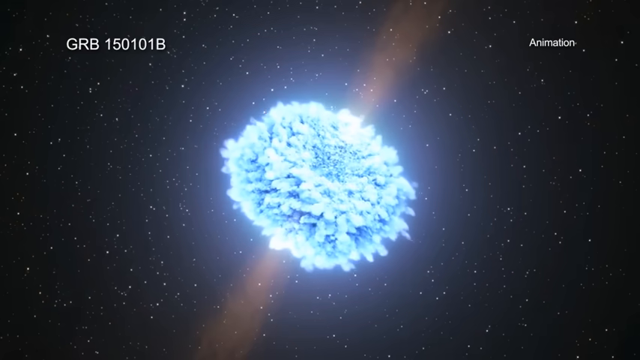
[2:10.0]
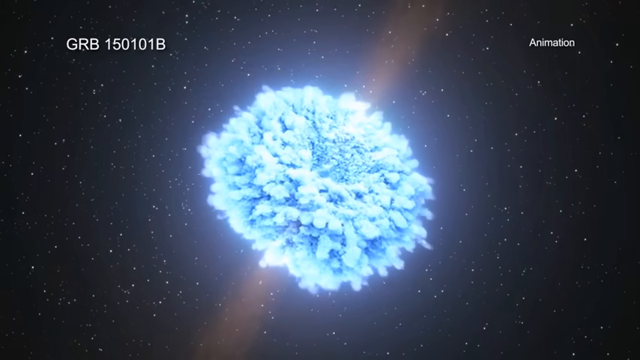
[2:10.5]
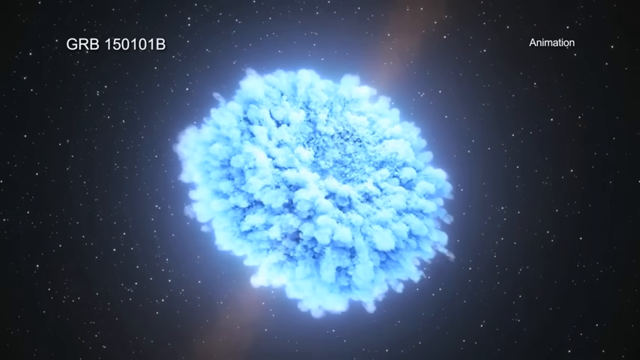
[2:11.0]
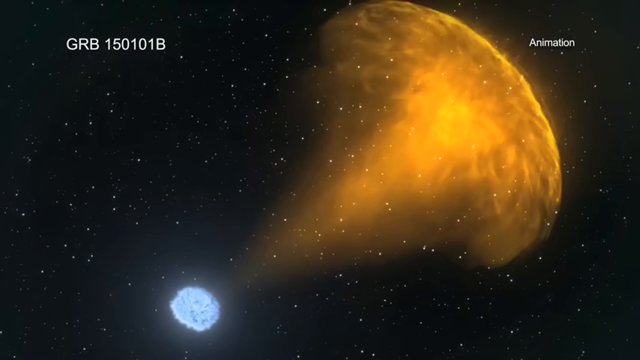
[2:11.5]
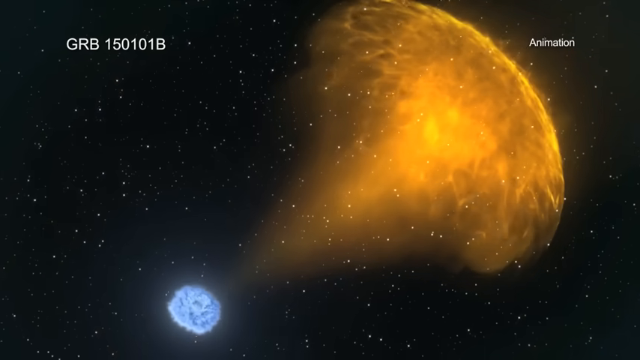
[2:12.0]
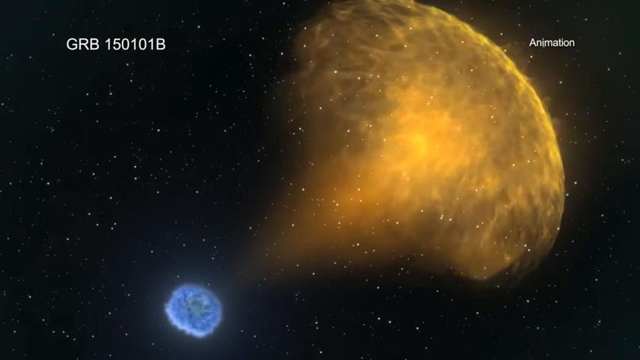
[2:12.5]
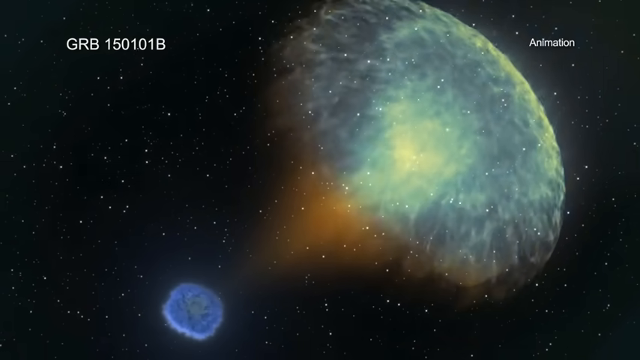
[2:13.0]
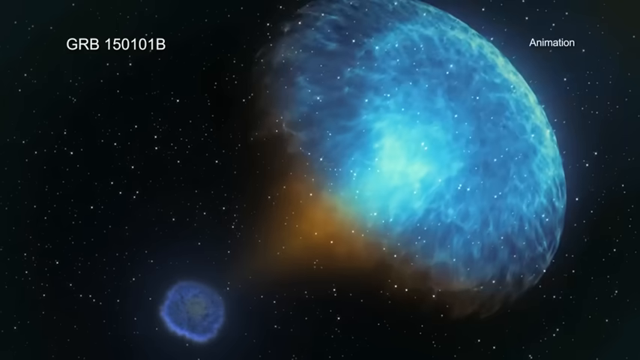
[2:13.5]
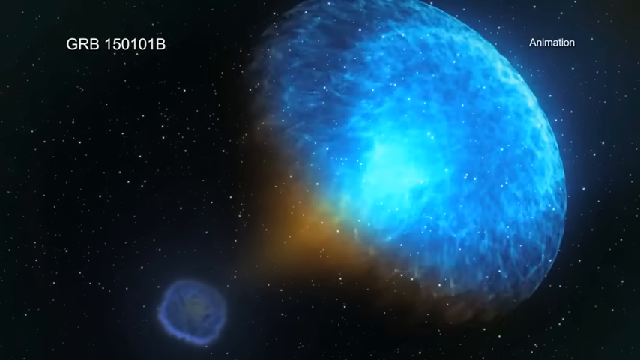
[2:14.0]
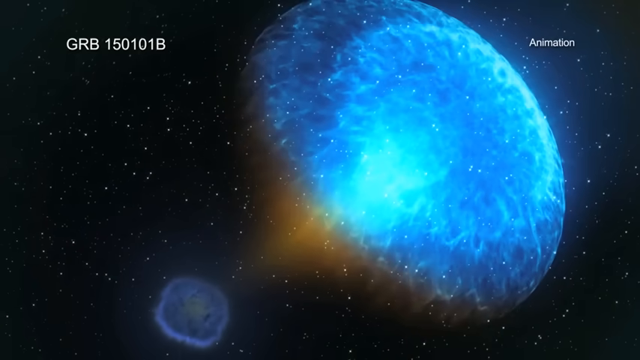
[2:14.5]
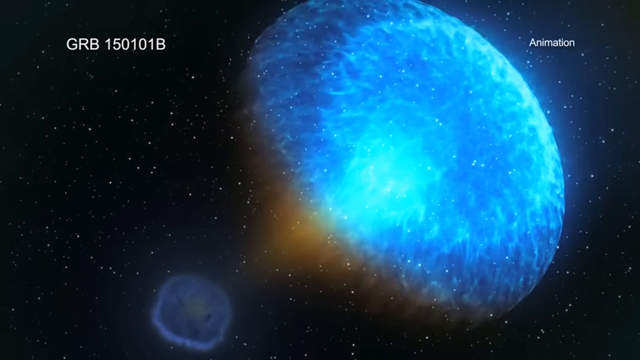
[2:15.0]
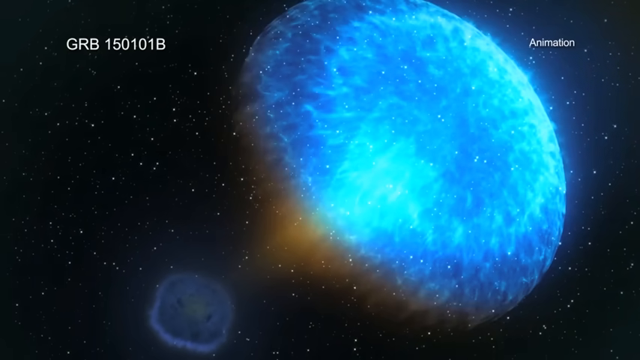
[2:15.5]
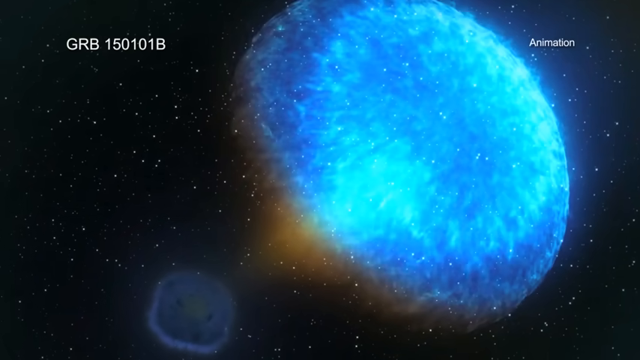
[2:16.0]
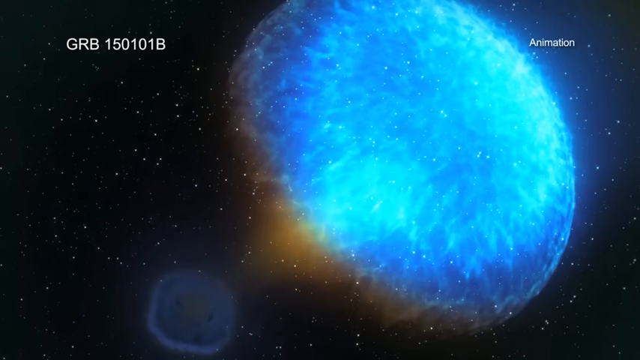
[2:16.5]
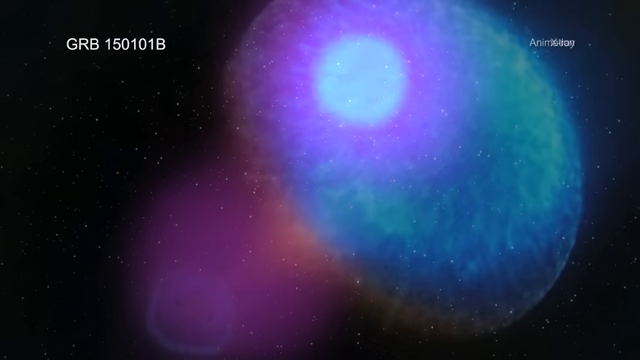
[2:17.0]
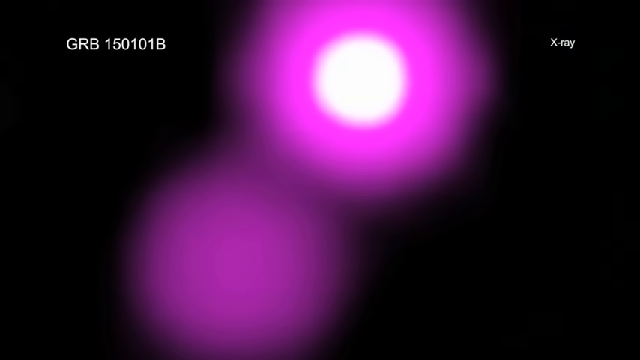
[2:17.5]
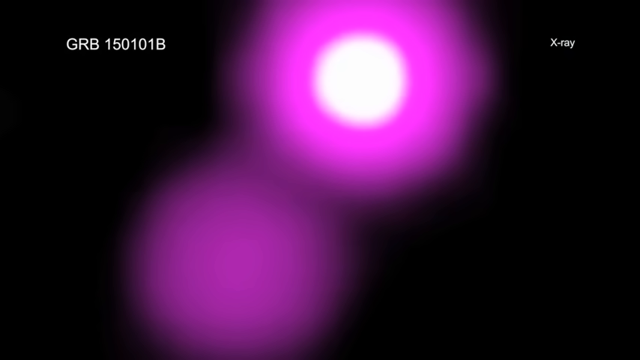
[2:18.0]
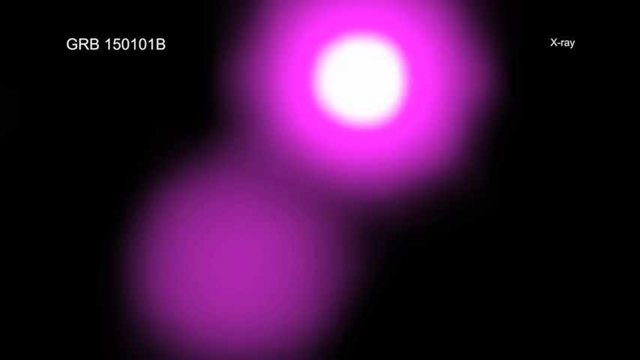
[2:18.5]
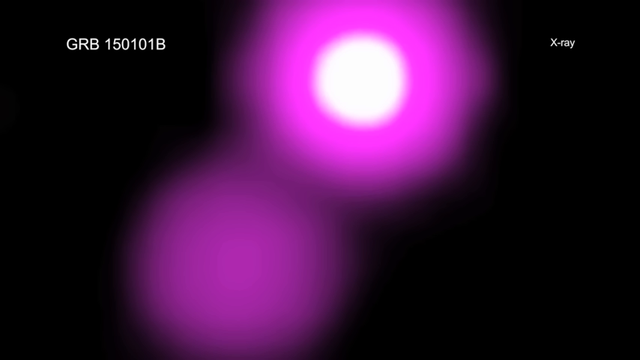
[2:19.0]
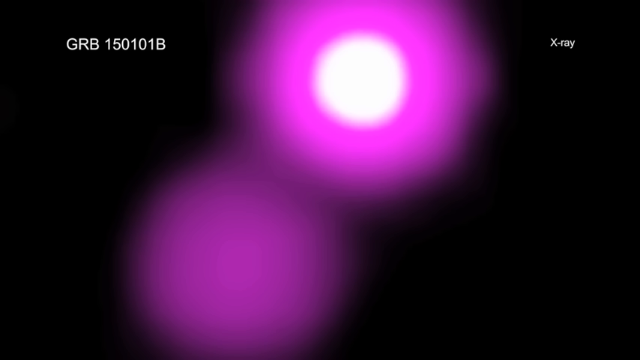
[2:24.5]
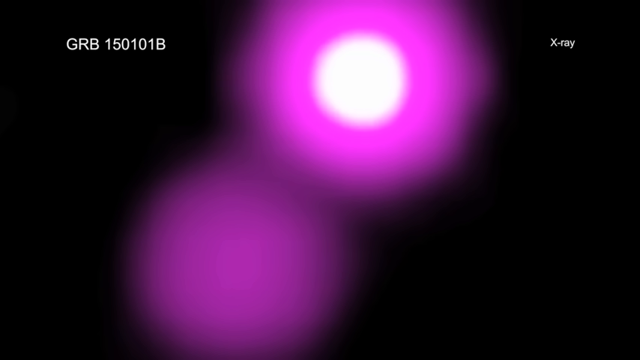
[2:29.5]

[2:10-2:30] An animated scene labeled "GRB150101B" shows an explosion of energy, visualized as a large blue circle that keeps expanding, followed by a large miasma of energy to the right of the ball. The ball of energy morphs from bright blue to yellow and darker blue, and the scene then shows the sky and space behind the energy. Small white pricks of light, stars that are apparently very far away, are visible in the background throughout this animation. Most of the footage is the animated scene with the label "animation" at the top right; one portion is the x-ray animated scene, where a single star seen up close explodes into a ball of energy.